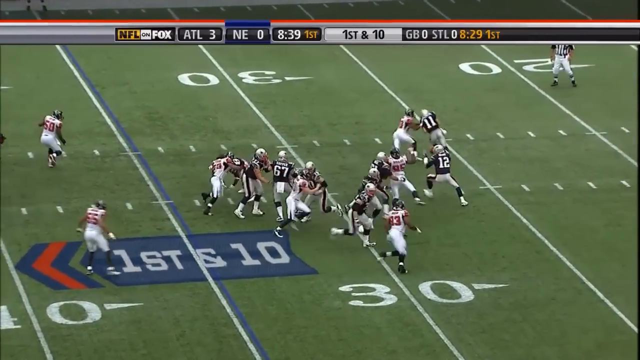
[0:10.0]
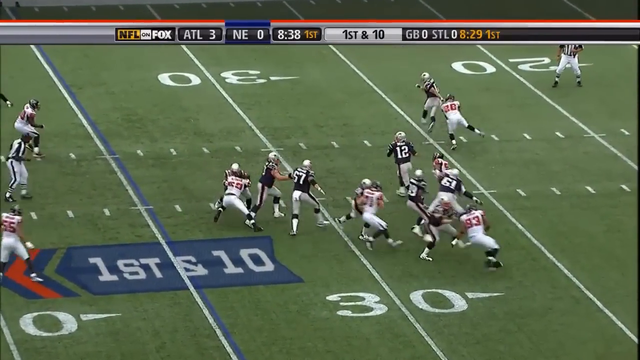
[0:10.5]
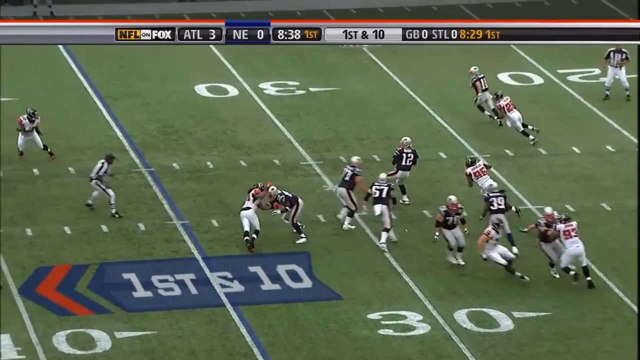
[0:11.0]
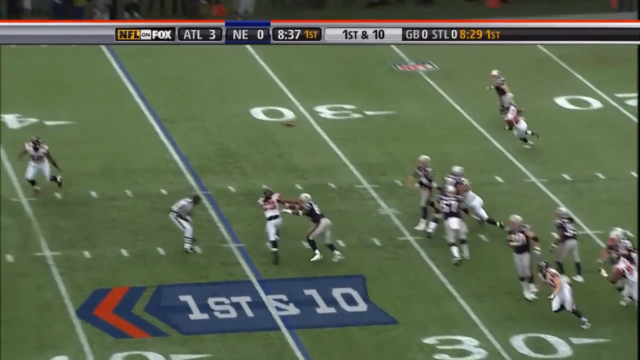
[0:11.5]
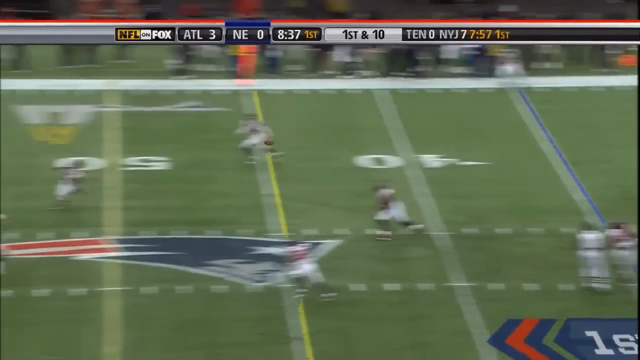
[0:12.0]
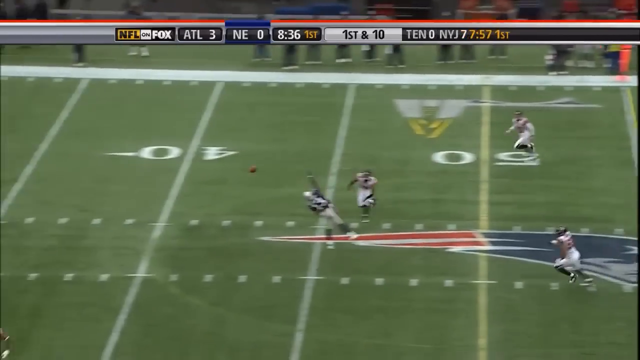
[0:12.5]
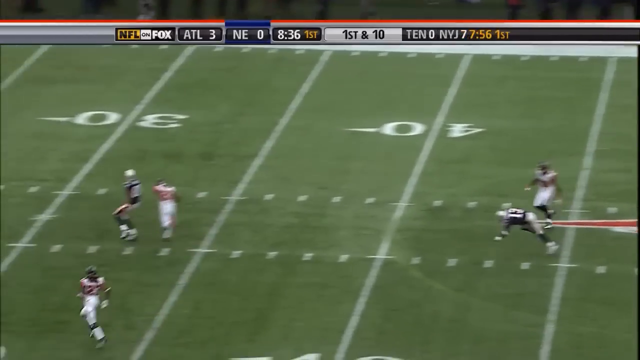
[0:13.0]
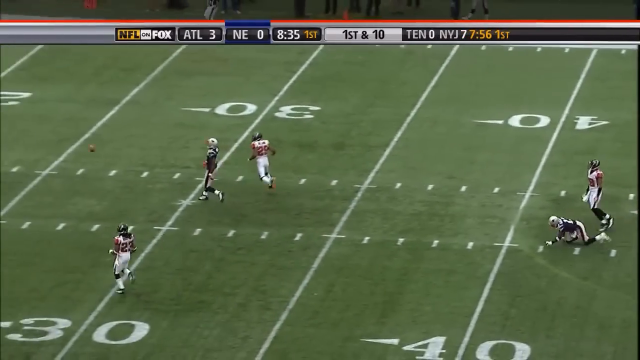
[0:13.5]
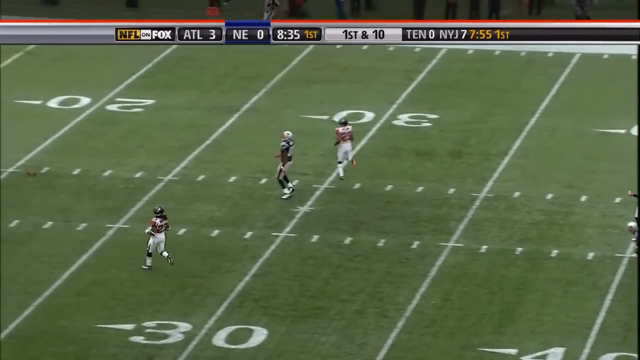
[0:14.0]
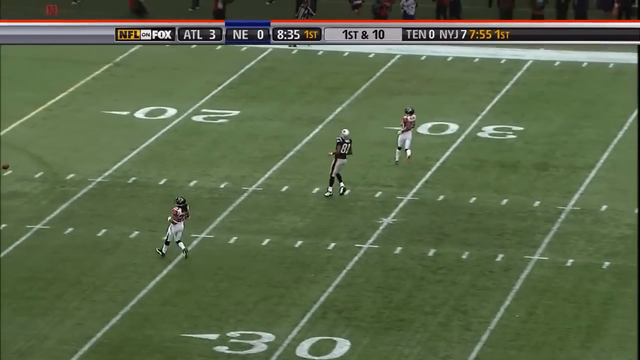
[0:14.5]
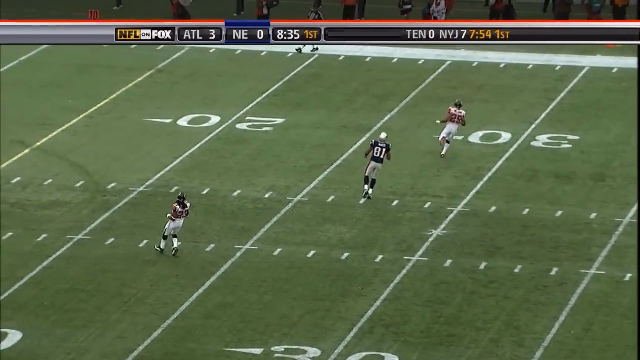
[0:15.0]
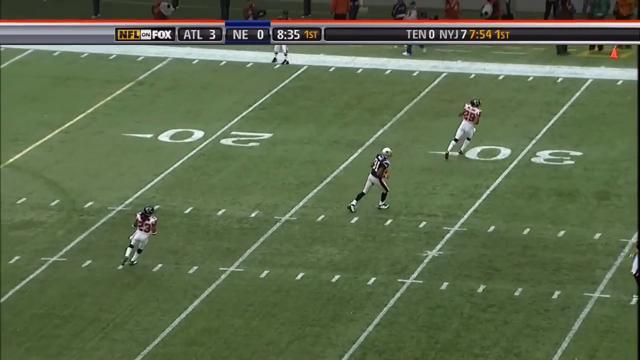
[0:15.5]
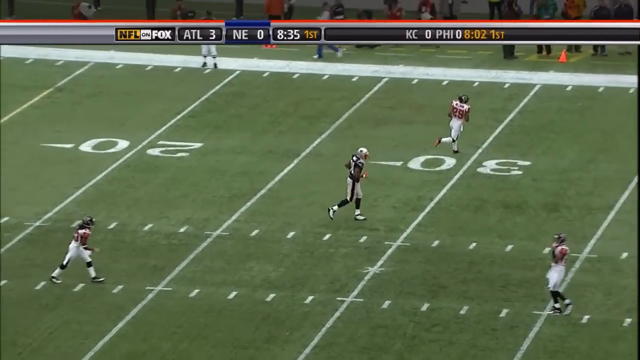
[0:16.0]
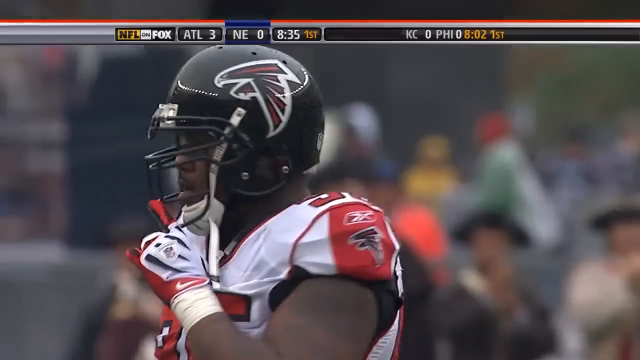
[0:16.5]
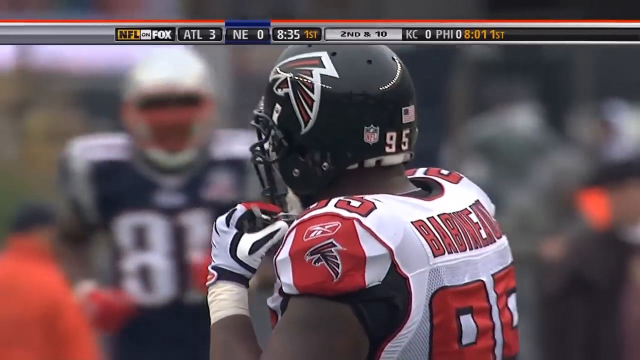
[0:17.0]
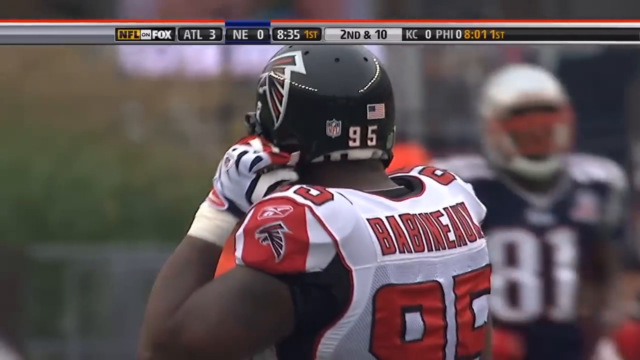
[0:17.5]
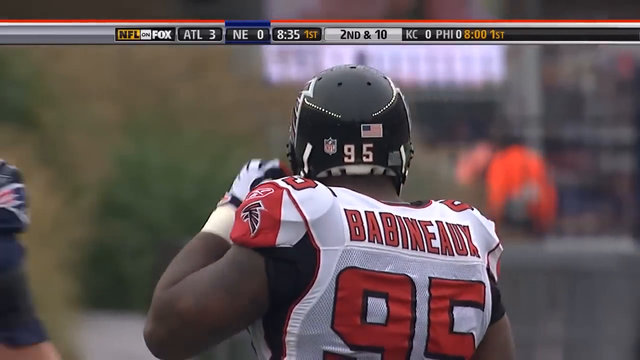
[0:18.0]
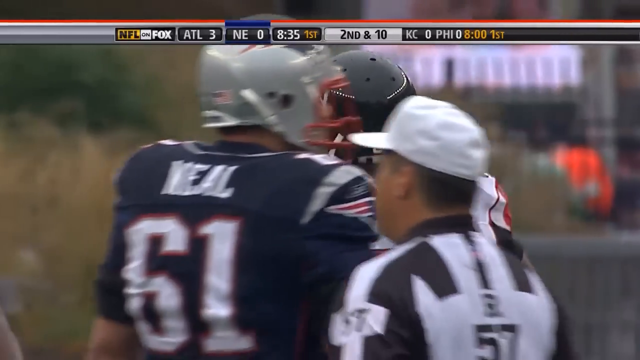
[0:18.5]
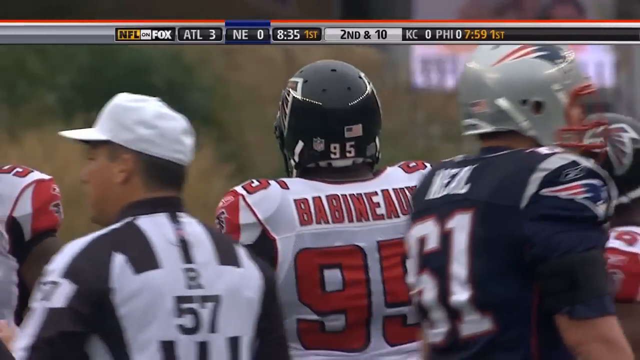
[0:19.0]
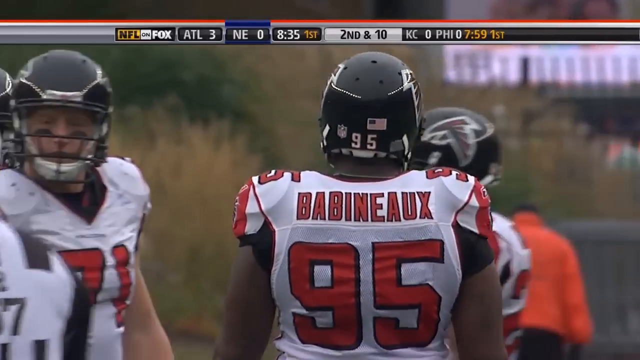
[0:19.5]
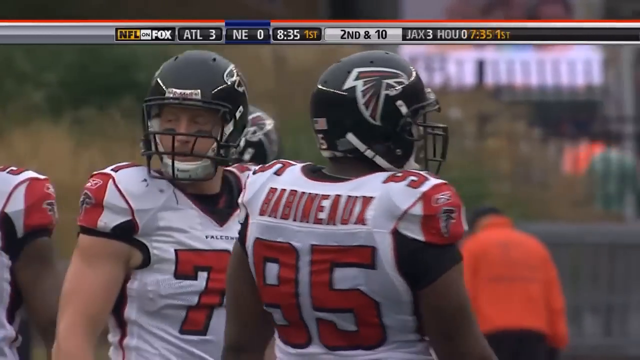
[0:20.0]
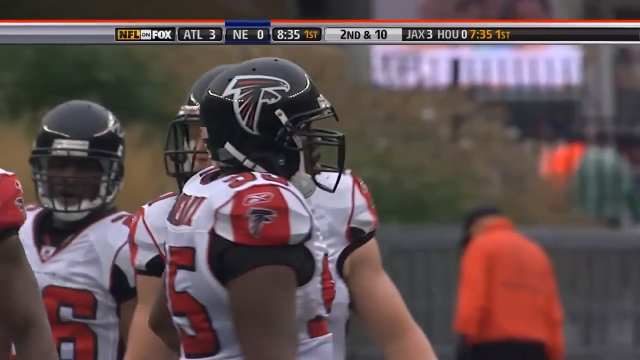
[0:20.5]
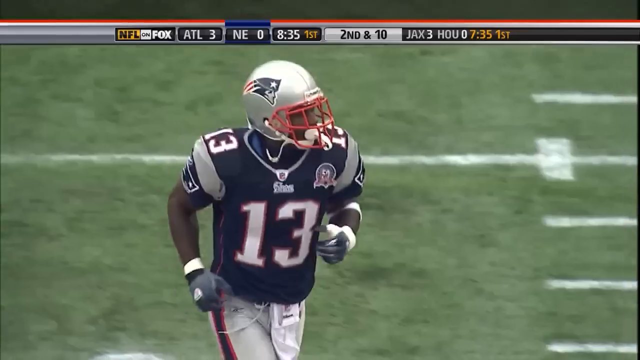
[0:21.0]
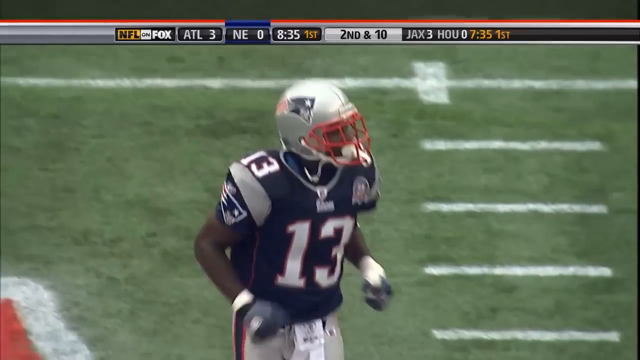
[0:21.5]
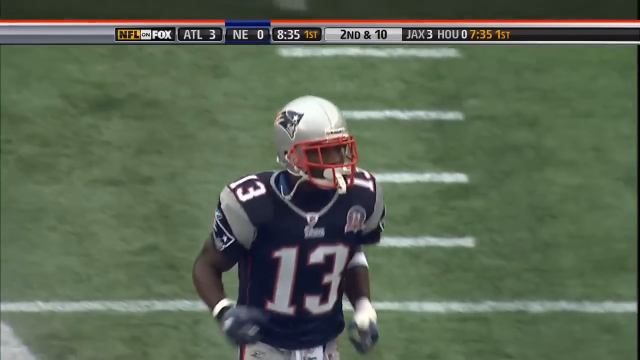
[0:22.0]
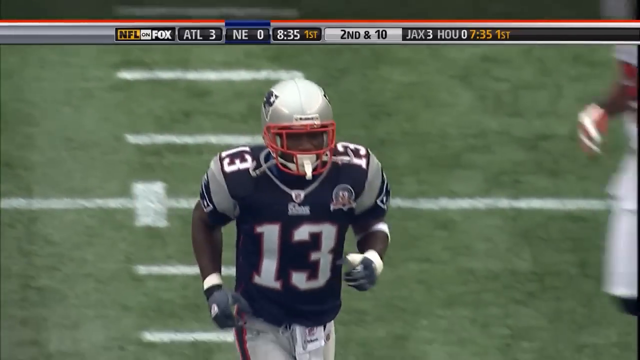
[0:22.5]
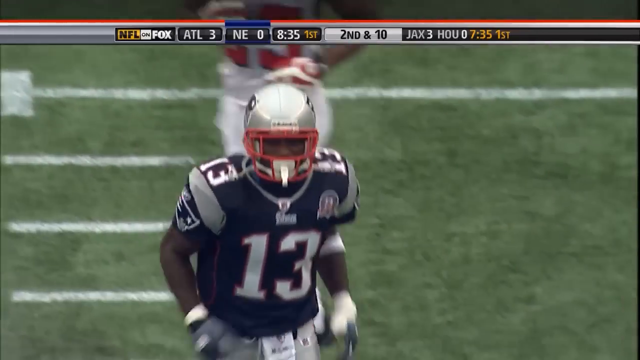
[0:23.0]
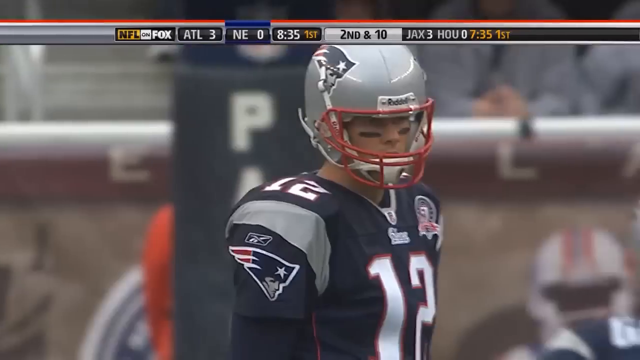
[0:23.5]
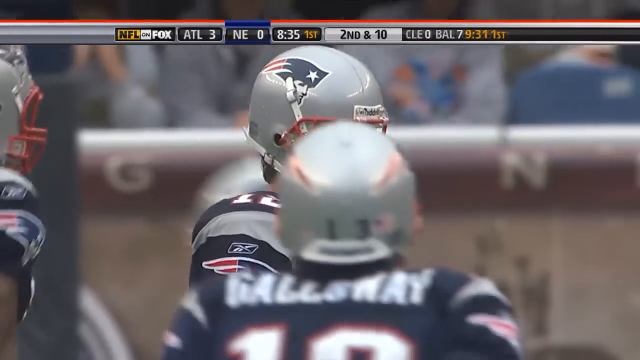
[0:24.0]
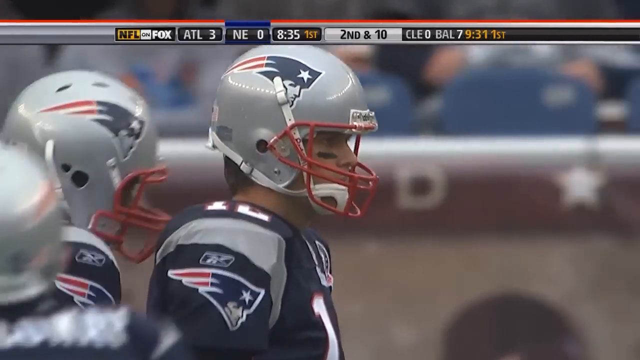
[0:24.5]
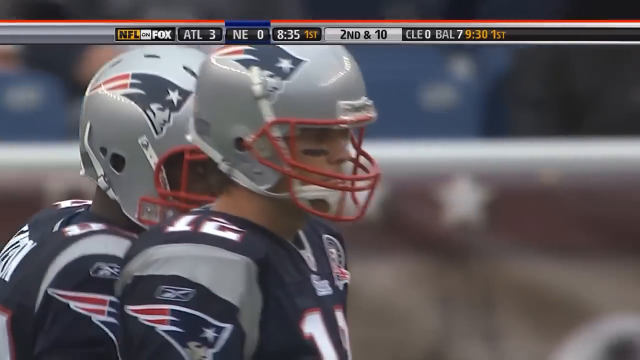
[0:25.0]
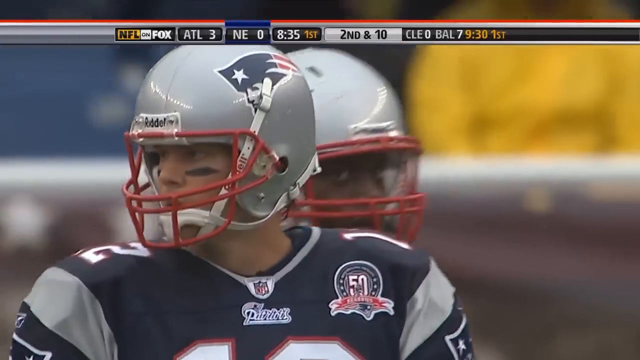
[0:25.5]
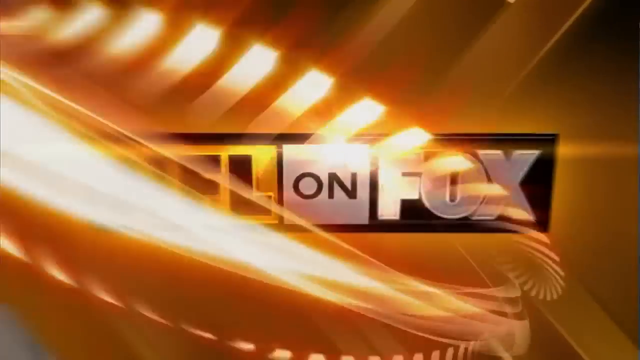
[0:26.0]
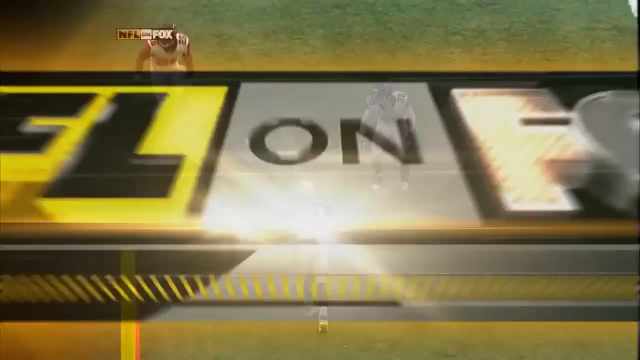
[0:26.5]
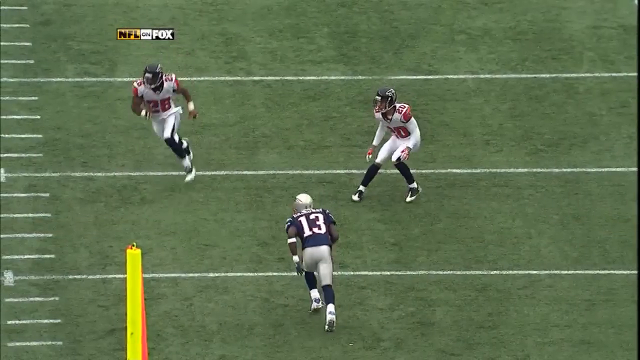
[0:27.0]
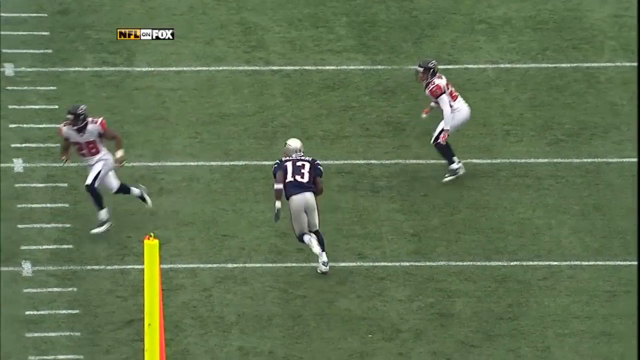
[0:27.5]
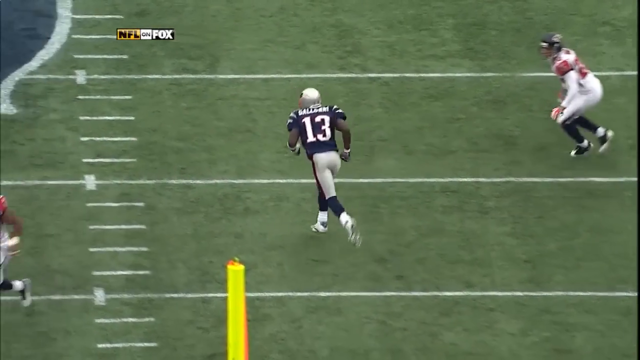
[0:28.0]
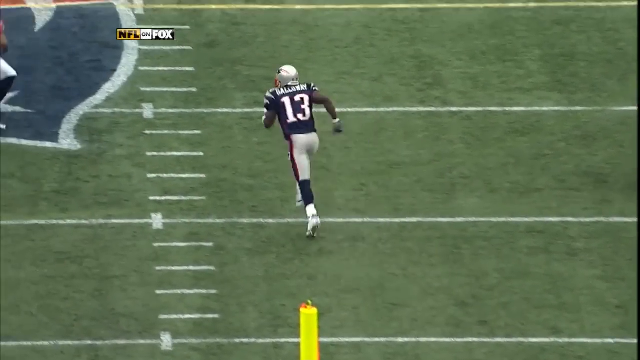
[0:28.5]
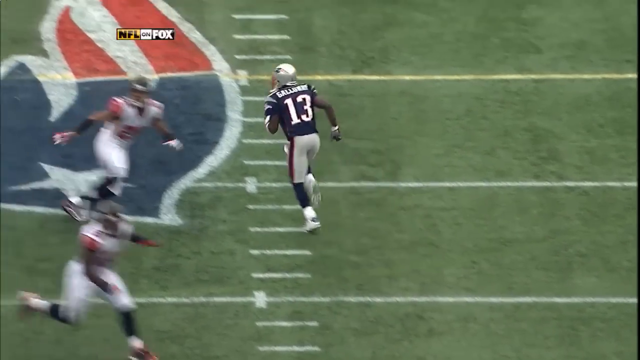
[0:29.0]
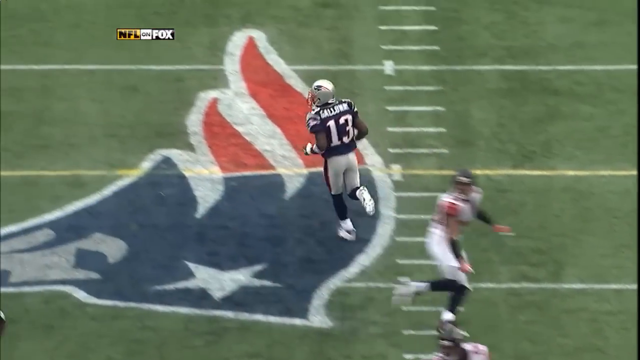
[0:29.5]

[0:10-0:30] Tom Brady takes the snap and turns back toward his running back, faking the handoff; a wide receiver wears number 11. As the pocket collapses, Brady steps forward and throws the ball to one of his wide receivers, and the pass falls incomplete. Scores from other games appear in the top right: Kansas City Chiefs 0, Philadelphia 0, and Jacksonville 3, Houston 0, with 7 minutes 35 seconds left in the first quarter. Number 13 trots back as Brady calls the players into the huddle. A short replay shows number 13 running a route toward the center of the field and stopping near the Patriots logo.